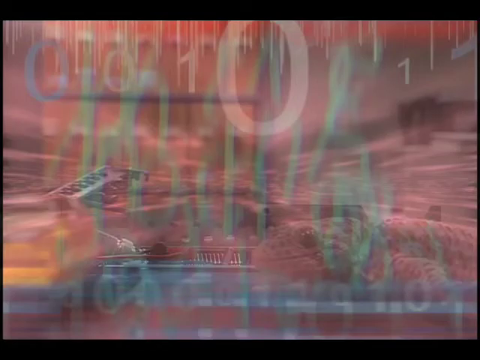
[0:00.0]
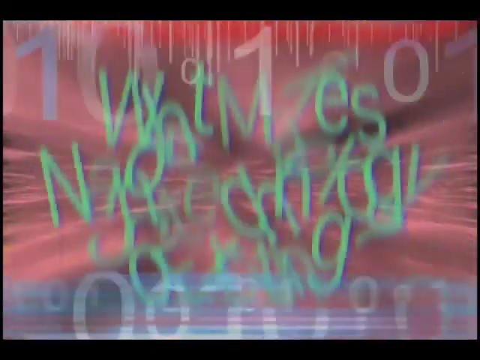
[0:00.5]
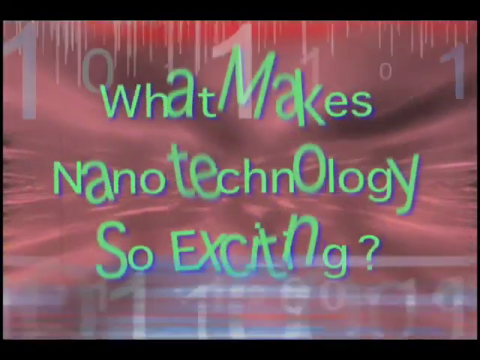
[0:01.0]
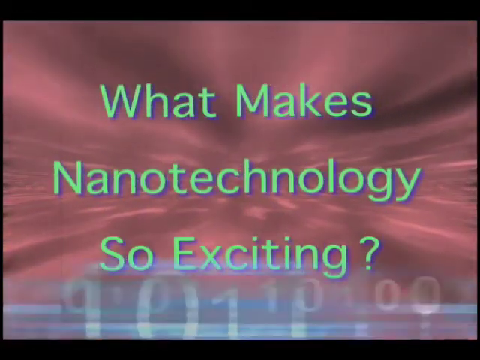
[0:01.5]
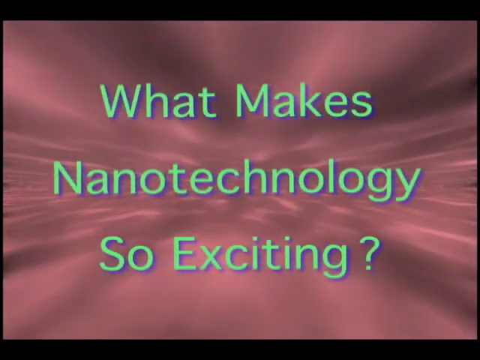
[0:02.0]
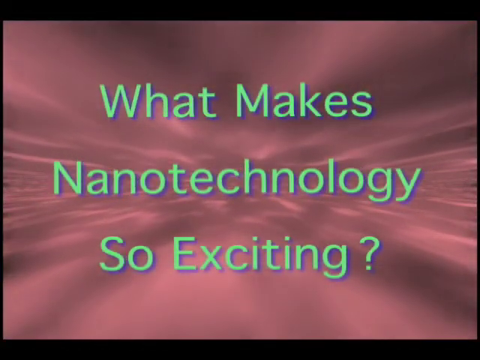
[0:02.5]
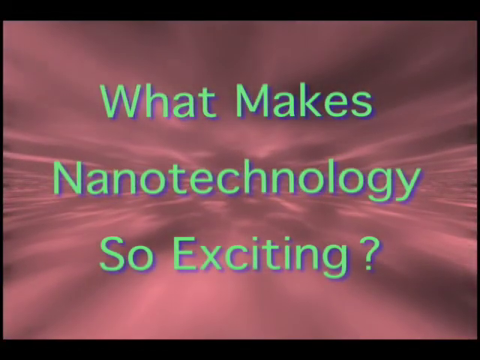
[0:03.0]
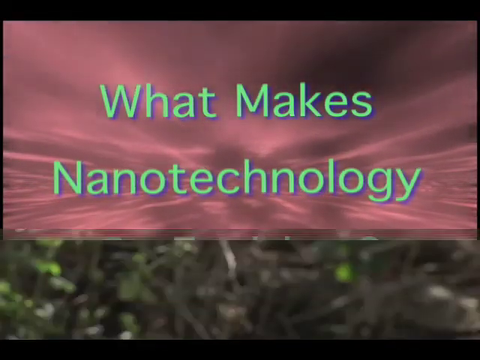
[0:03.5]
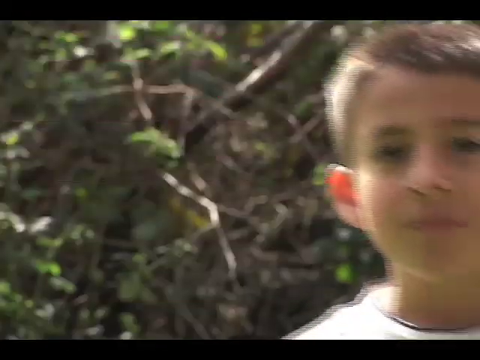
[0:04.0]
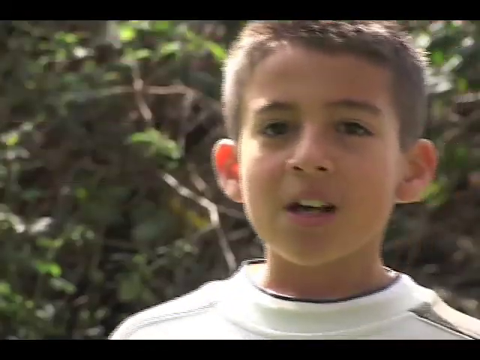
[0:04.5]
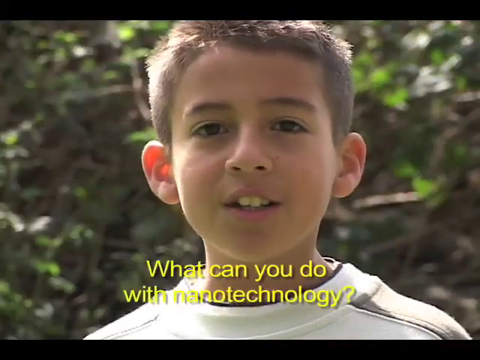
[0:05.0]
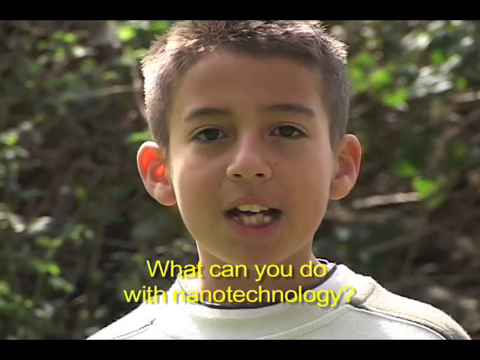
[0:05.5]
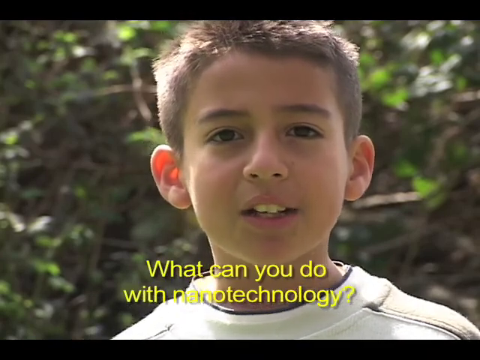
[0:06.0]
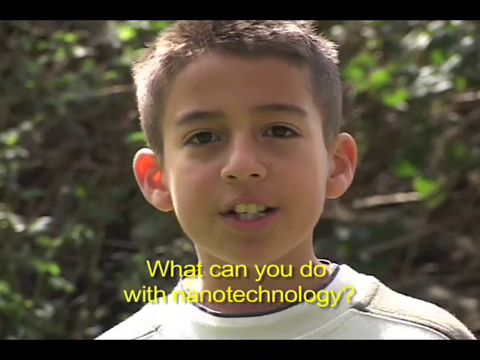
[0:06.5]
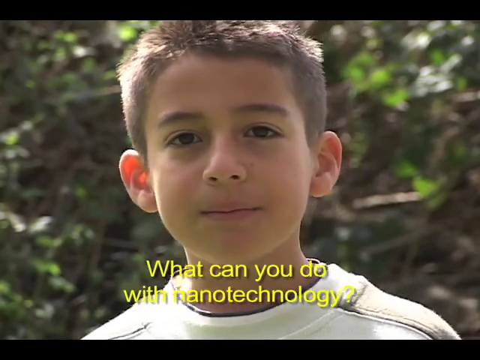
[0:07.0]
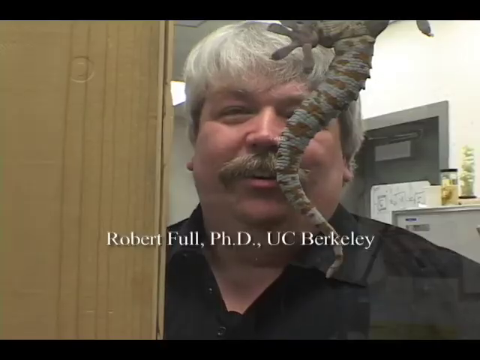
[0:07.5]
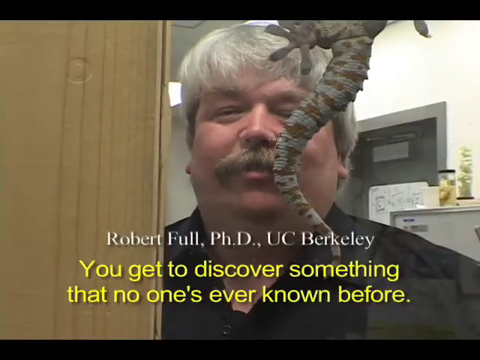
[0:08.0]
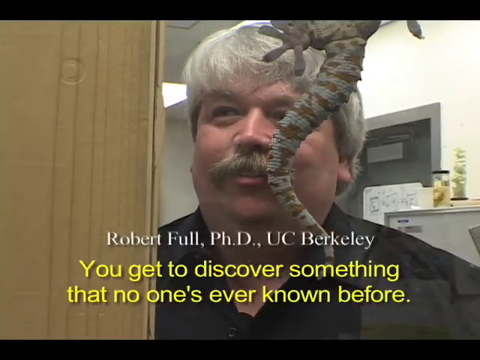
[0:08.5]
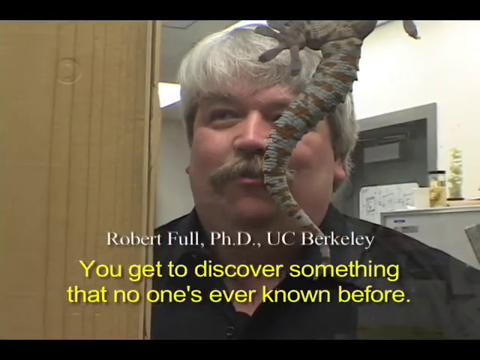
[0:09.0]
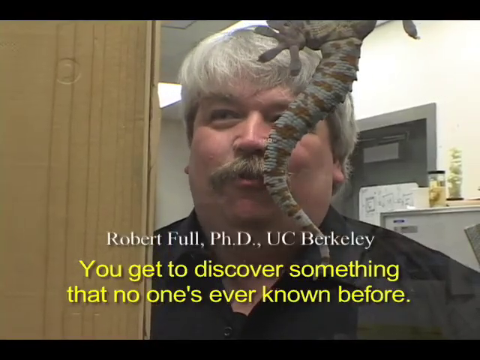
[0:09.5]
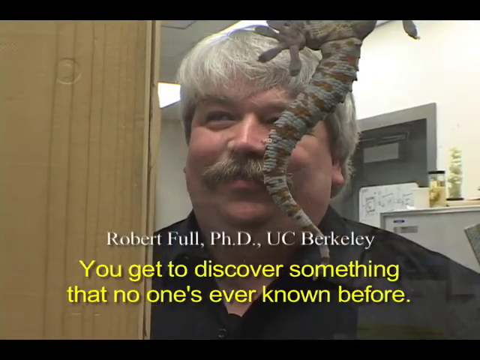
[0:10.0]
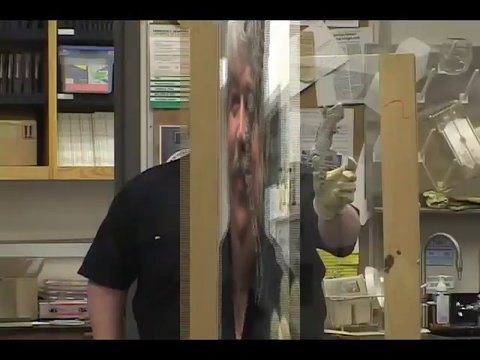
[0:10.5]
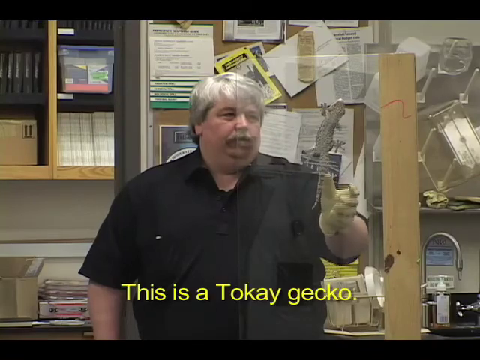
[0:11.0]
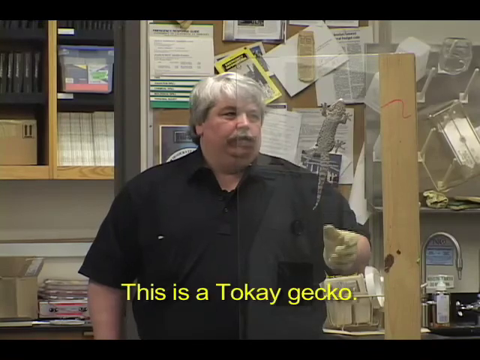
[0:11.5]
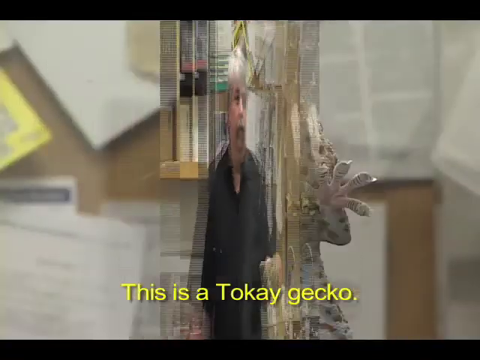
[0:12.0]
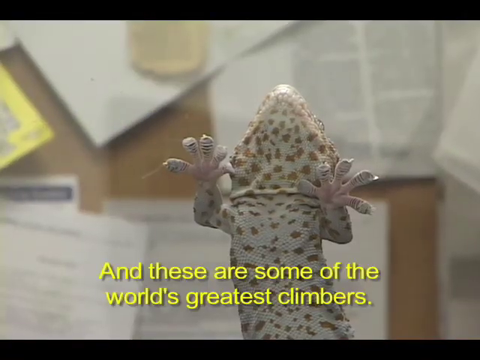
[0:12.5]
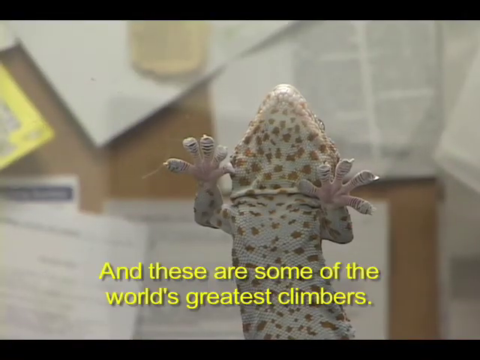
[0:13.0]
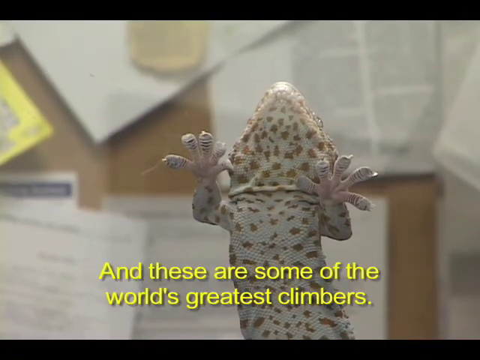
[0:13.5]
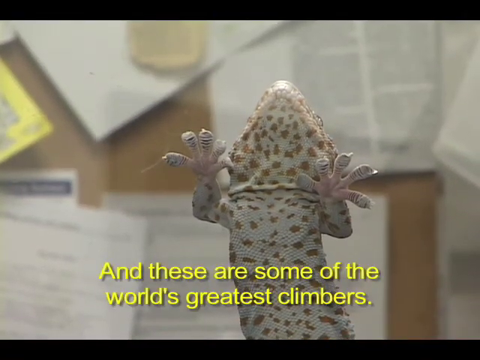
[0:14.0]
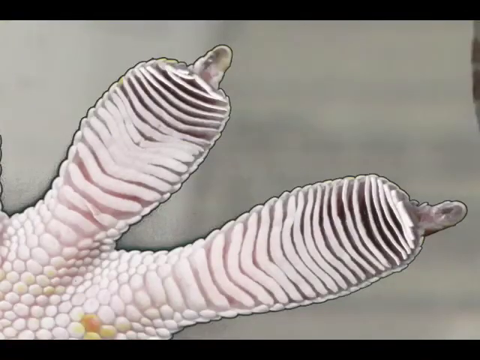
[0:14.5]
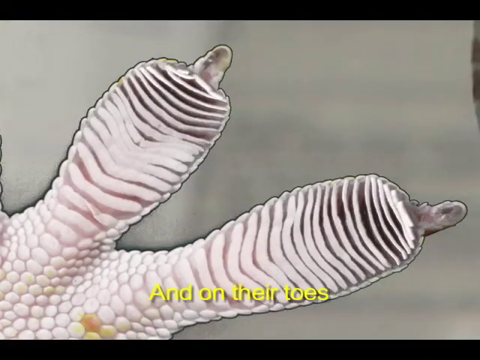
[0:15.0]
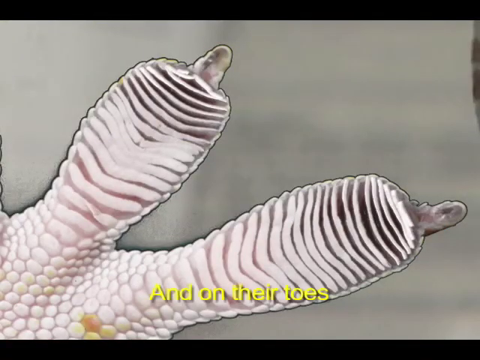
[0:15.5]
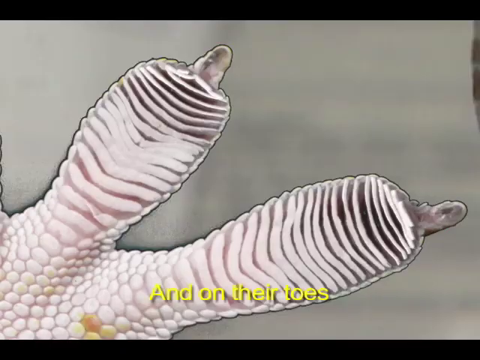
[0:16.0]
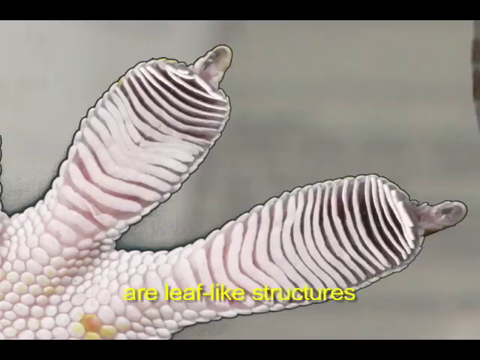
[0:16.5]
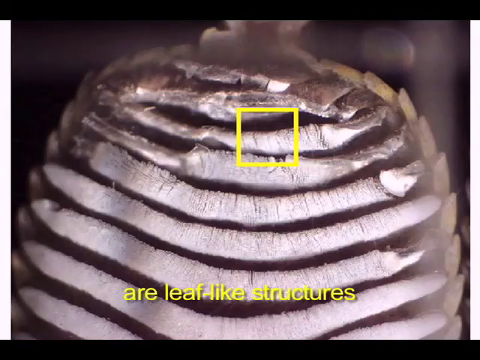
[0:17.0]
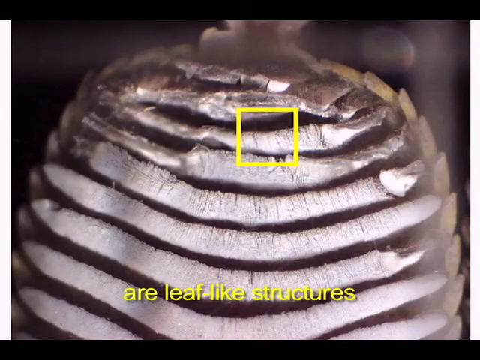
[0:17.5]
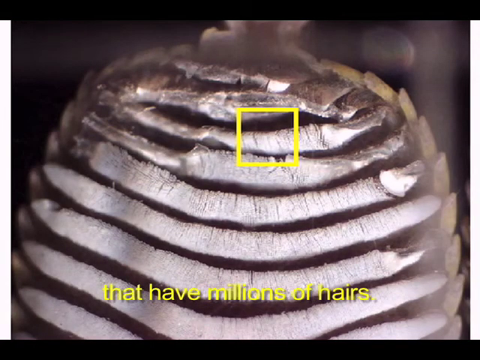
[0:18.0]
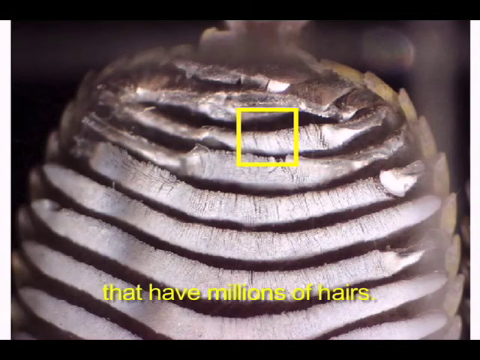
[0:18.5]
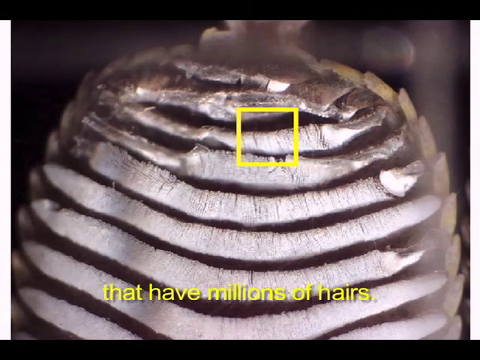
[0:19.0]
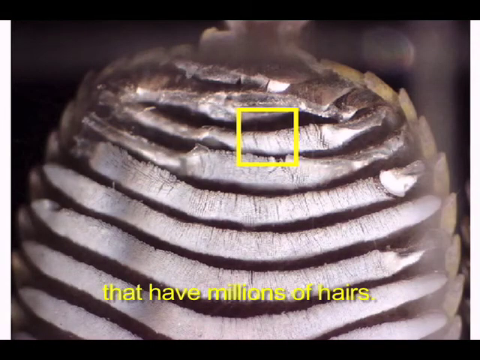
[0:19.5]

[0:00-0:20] Light green or turquoise words fly onto the screen reading "what makes nanotechnology so exciting?" over a moving background that looks AI generated and seems to show space or clouds, zooming in. The scene changes to a young boy, about eight to 10 years old, with yellow words on the screen reading "what can you do with nanotechnology?" He wears a light colored sweatshirt and has short, cropped brown hair and brown eyes, with leaves from bushes or trees behind him, and he talks to the camera. Next, a man stands in what seems to be a doorway, since a wall to his right partially blocks the right side of his body. He has thick gray hair with bangs and a thick brown and gray mustache, and a lizard hangs down in front of him, in front of the left side of his face. White words on the screen read "Robert Full, PhD, UC Berkeley," and yellow text reads "you get to discover something that no one's ever known before." Behind him is an office with a metal filing cabinet with some art on it, a gray door and a ceiling. Footage follows of the gecko moving in a glass type cage.